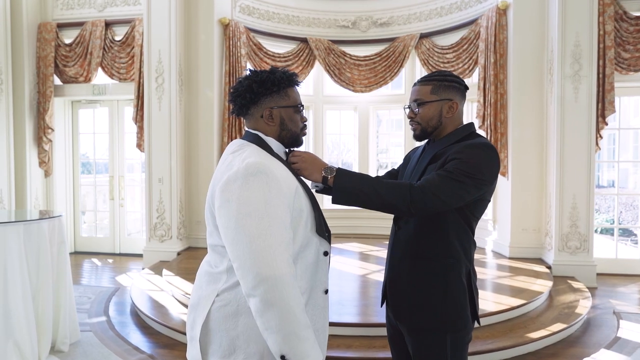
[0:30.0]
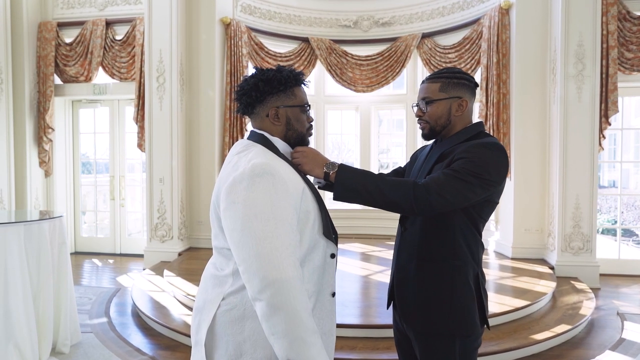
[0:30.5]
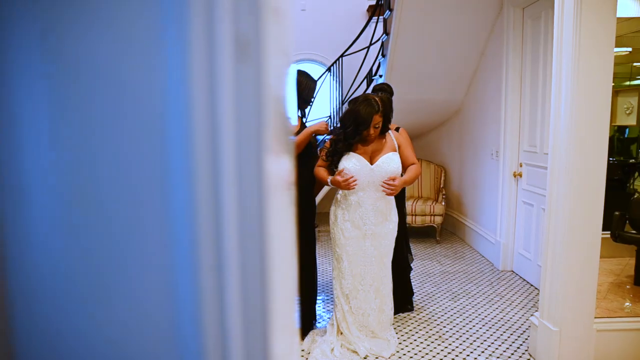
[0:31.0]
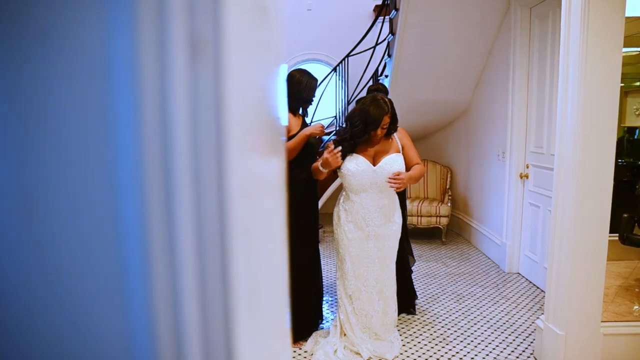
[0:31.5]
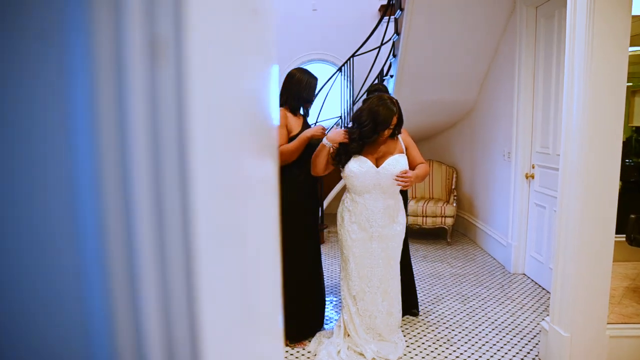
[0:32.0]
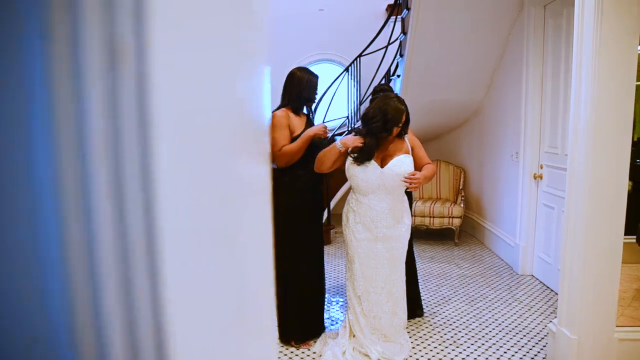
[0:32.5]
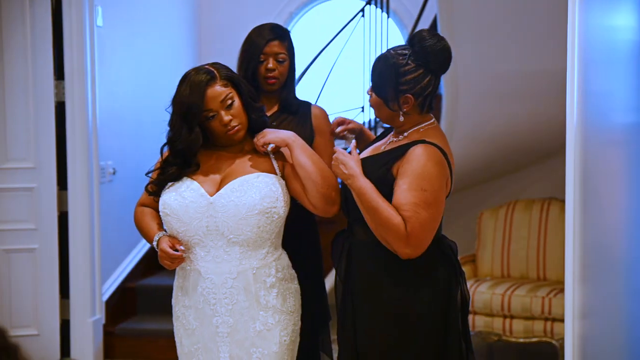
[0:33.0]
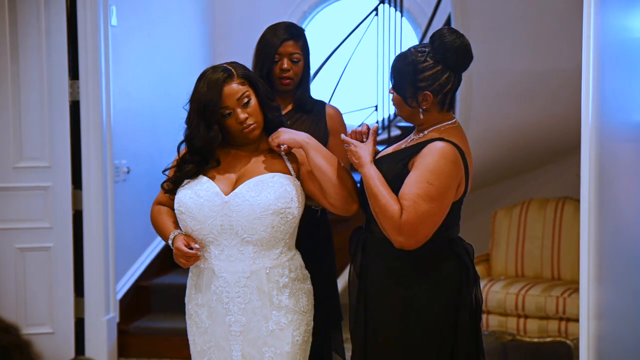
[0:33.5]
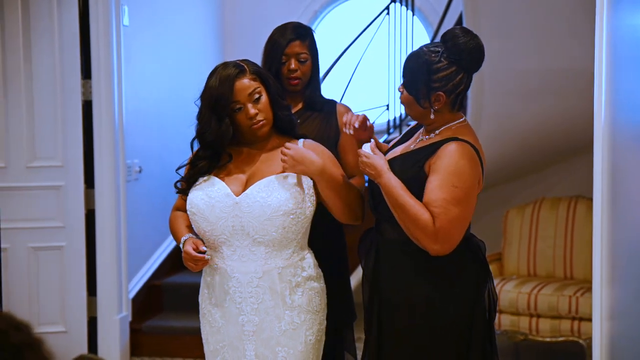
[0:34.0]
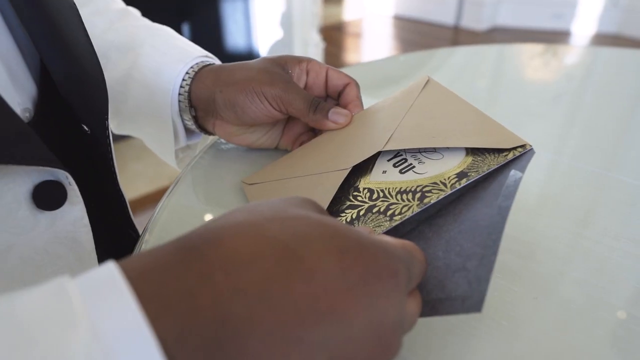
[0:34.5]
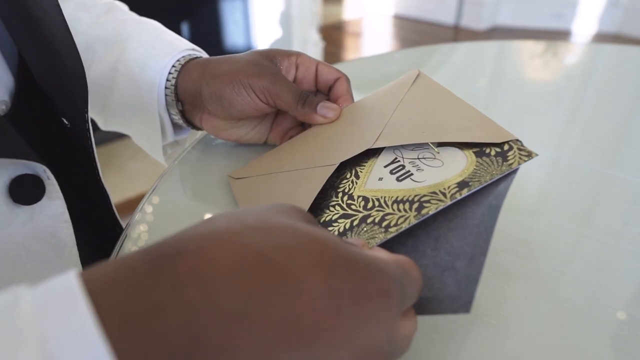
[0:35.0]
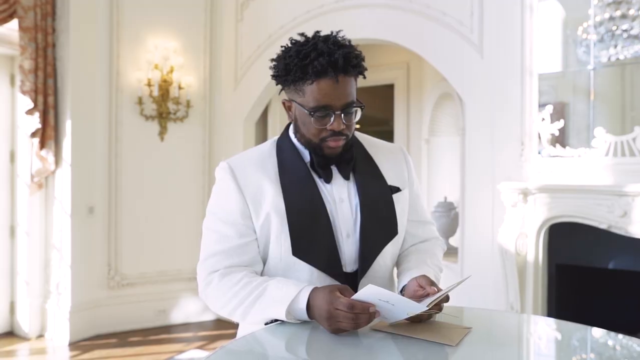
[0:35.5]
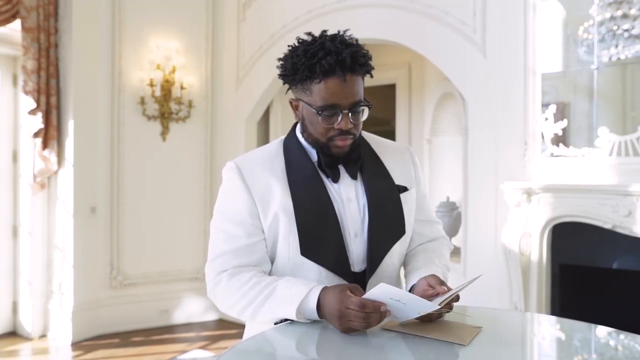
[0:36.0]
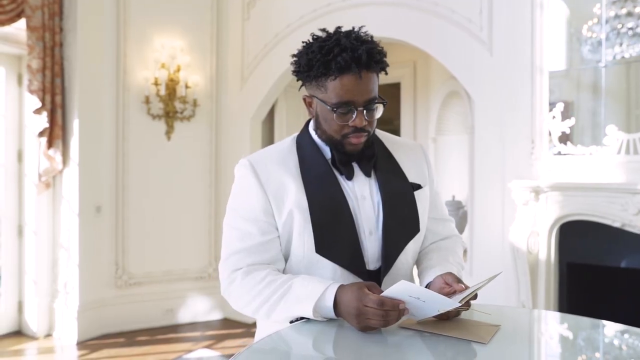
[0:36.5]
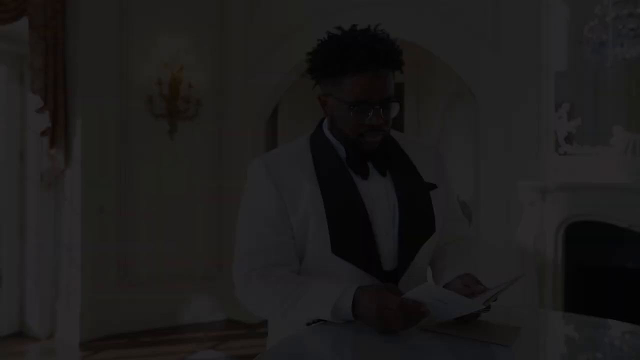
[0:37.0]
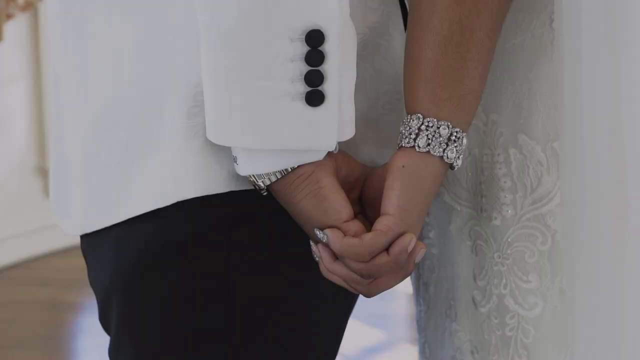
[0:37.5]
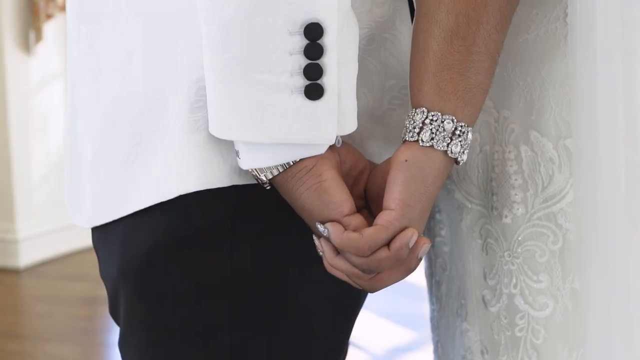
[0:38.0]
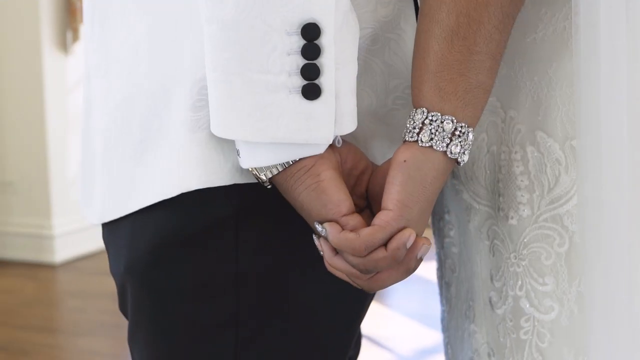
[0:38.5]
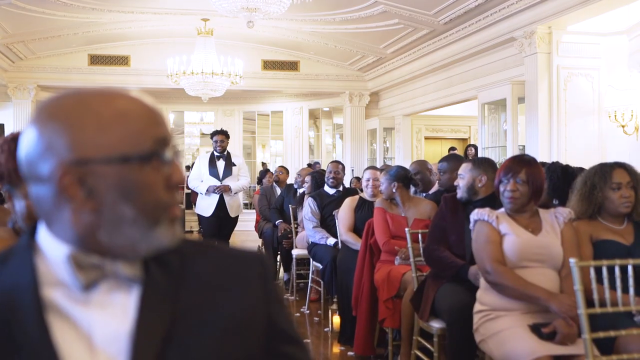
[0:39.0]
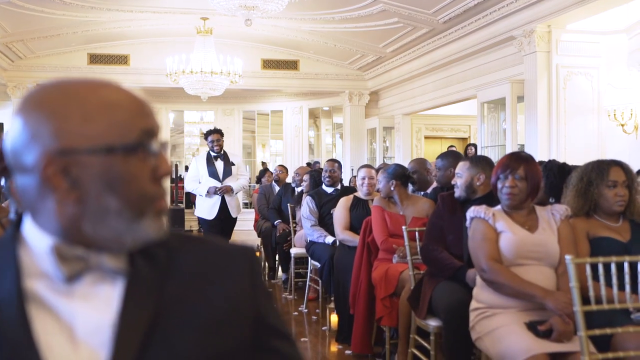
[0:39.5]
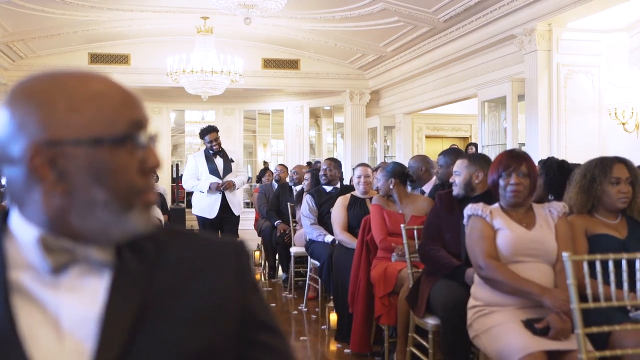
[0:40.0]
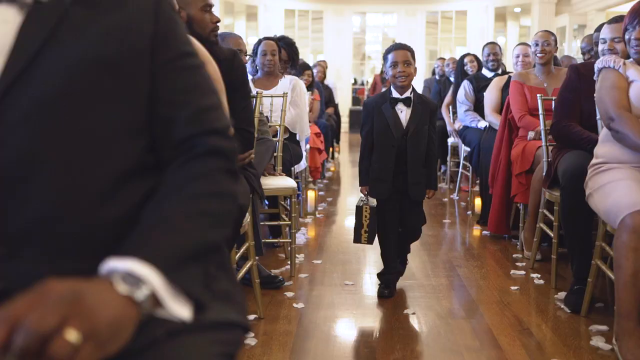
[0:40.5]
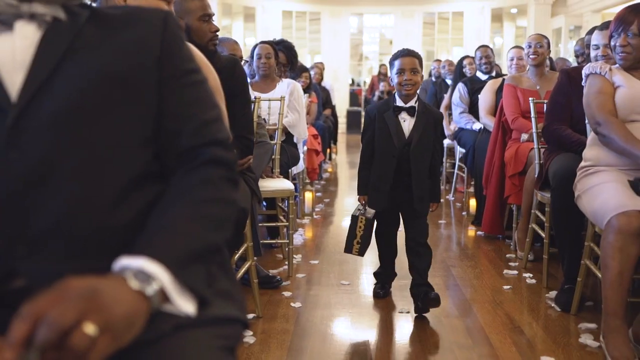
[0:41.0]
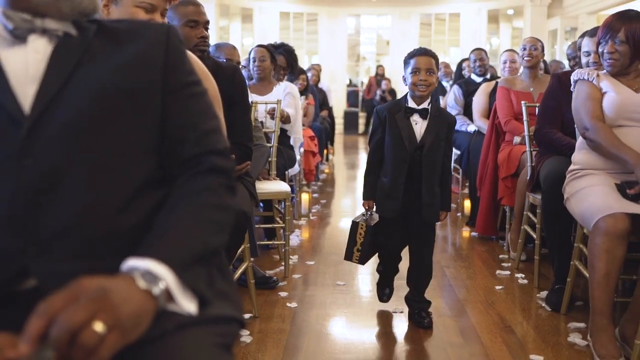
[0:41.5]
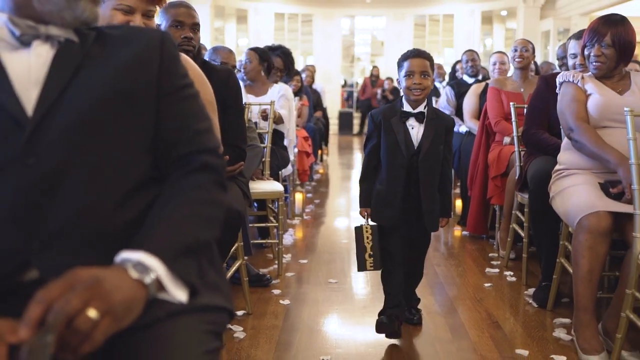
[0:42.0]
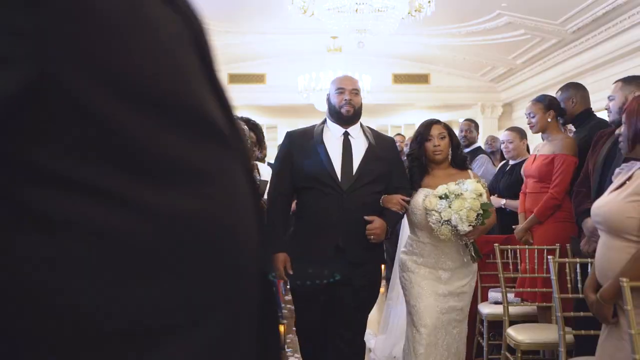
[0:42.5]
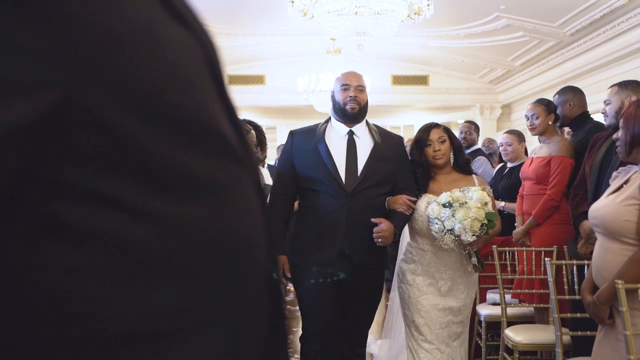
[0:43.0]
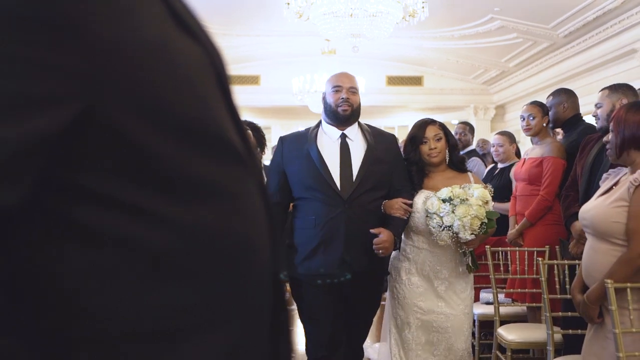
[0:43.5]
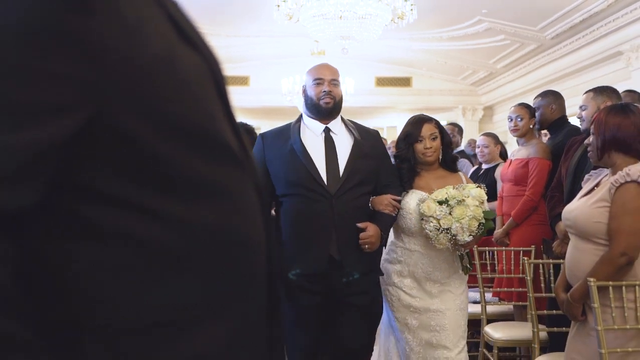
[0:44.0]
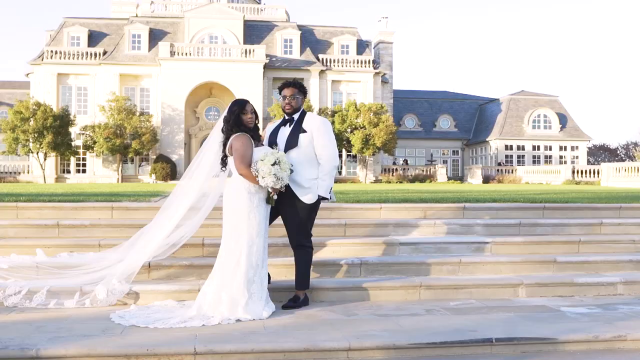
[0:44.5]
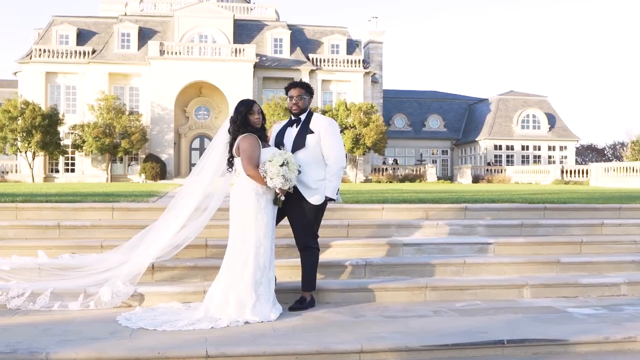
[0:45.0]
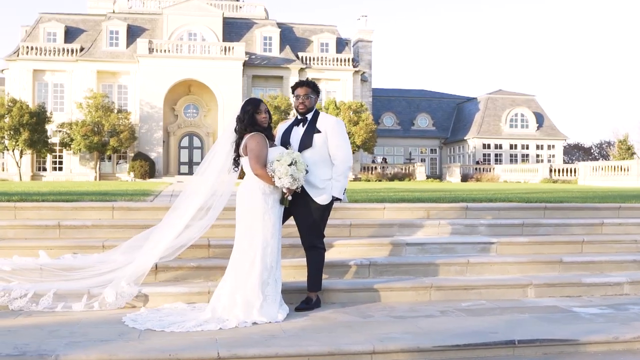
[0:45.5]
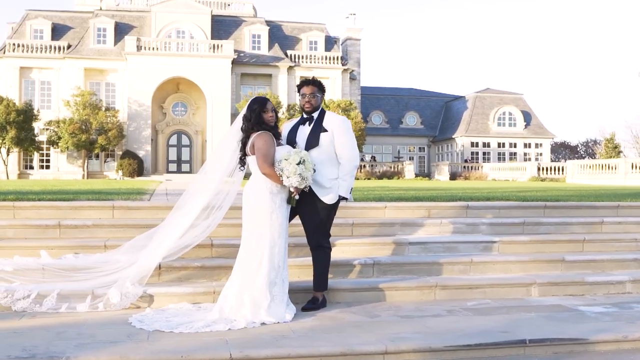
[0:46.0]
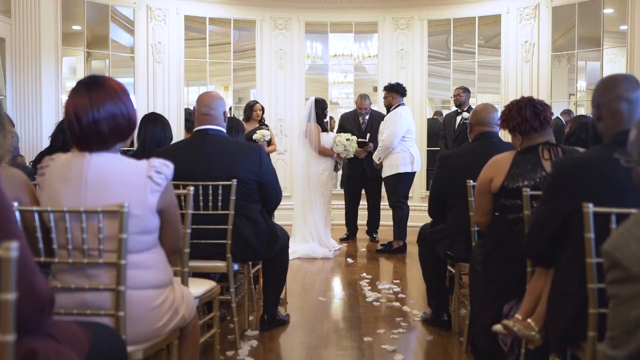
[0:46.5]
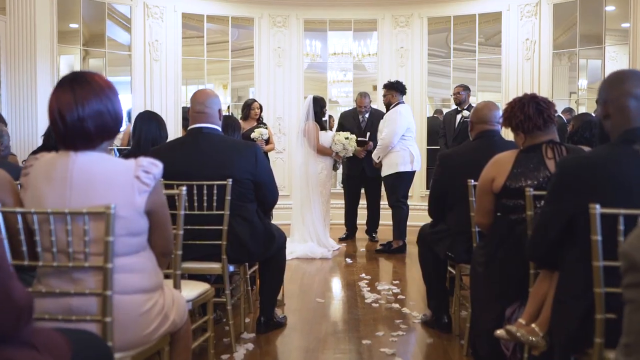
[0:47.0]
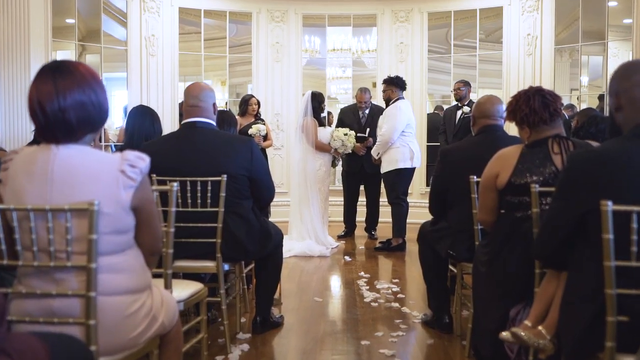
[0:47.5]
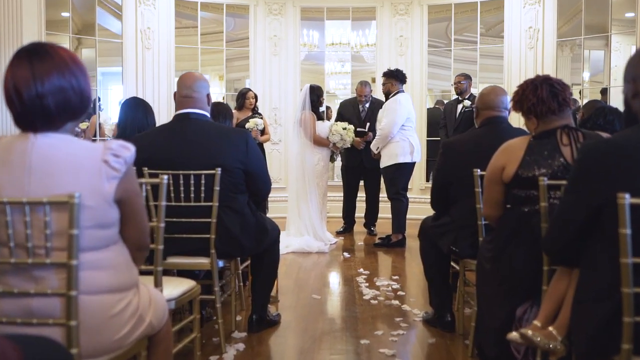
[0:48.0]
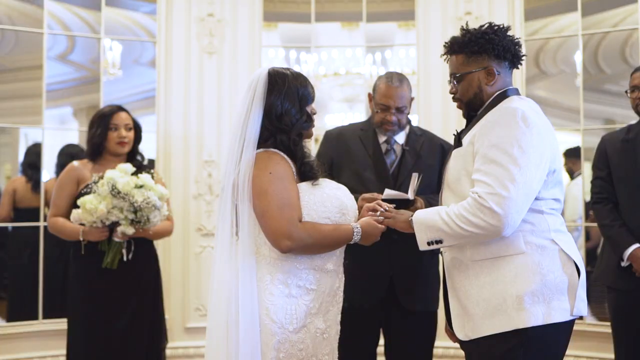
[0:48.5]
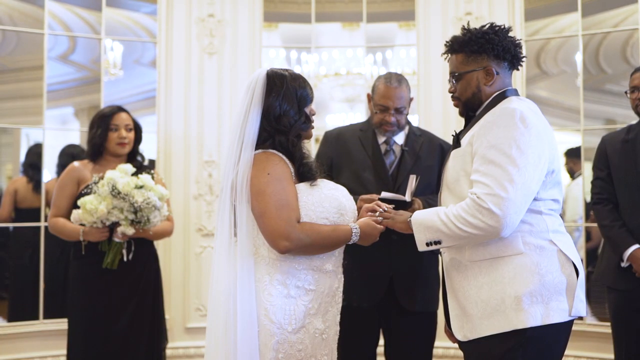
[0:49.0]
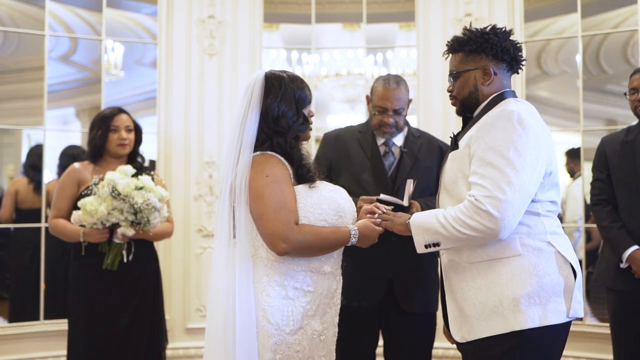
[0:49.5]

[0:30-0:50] One of the groomsmen, or possibly a family member, helps the groom put on his tie. The bride, now in her wedding dress, has two bridesmaids helping her do up the dress, and she has her jewelry on. The groom takes a card out of an envelope; he now wears a white jacket with a black lapel. A shot of the bride and groom's hands shows them holding hands while standing back to back, with her diamond bracelet and his silver watch visible. The groom walks down the aisle in a hall, with guests sitting in chairs on either side, and he looks very happy. A little boy in a black tuxedo carries the lockbox holding the rings, as the ring-bearer. The bride walks down the aisle with a large bouquet of white flowers, looking very pretty, escorted by a gentleman in a black suit, perhaps her father or a family member. The couple stands outside on the grounds by a staircase in front of the house, posing for pictures. They are then at the altar saying their vows, and the groom puts the ring on her finger.